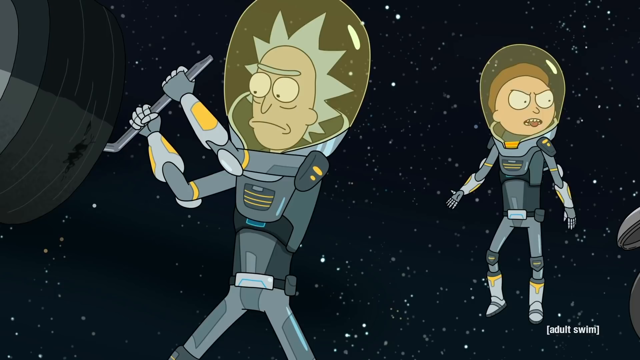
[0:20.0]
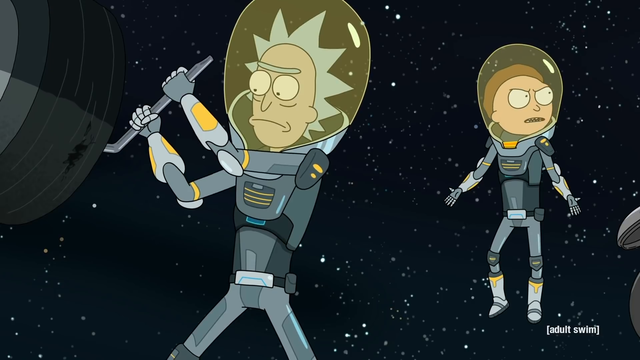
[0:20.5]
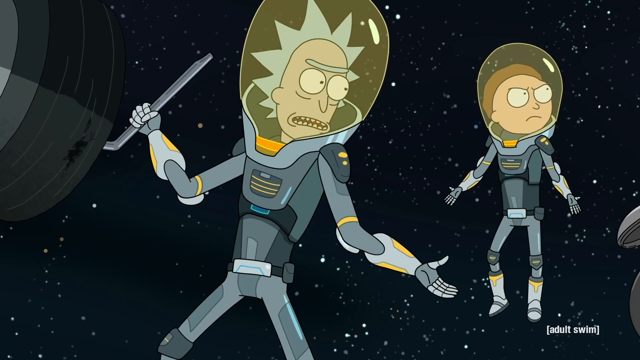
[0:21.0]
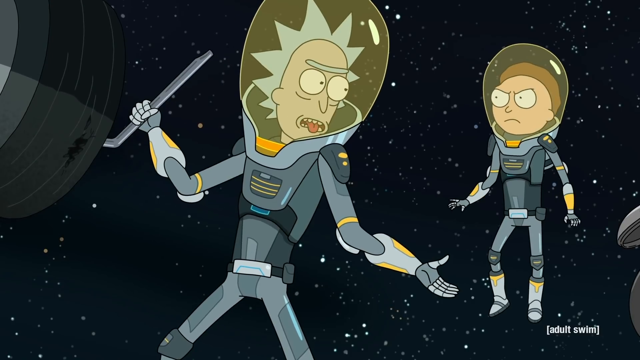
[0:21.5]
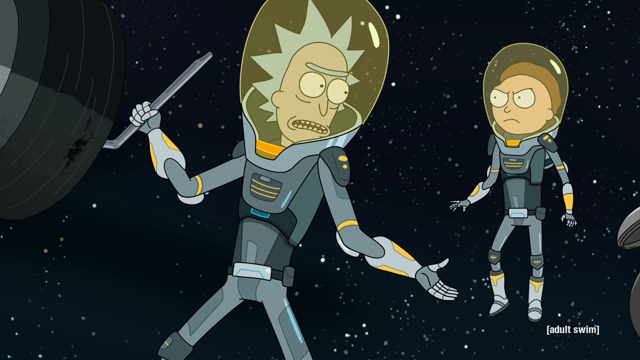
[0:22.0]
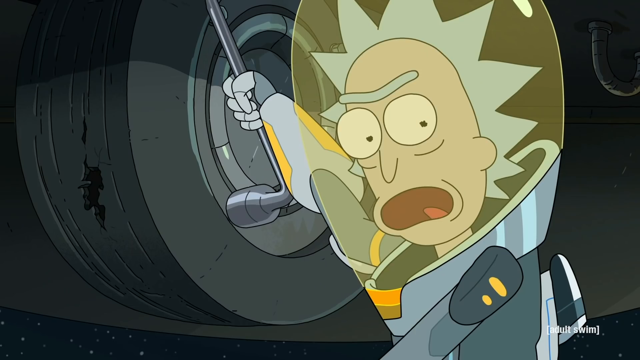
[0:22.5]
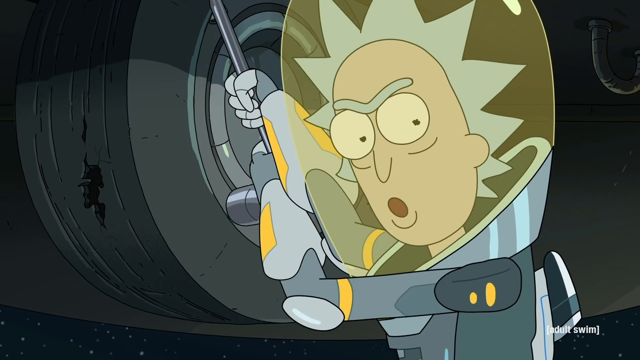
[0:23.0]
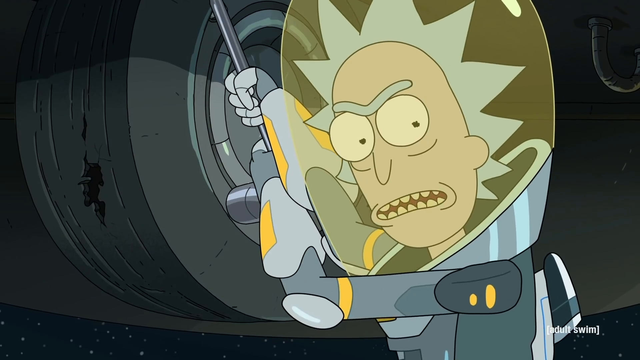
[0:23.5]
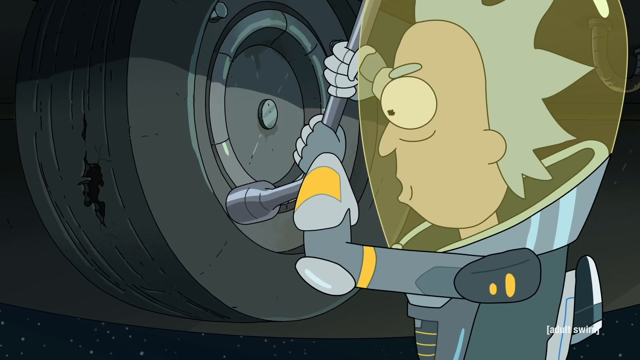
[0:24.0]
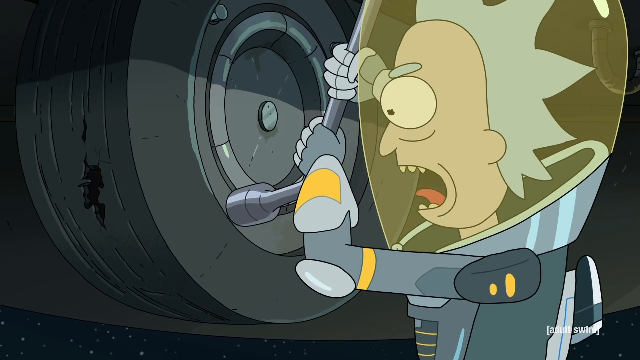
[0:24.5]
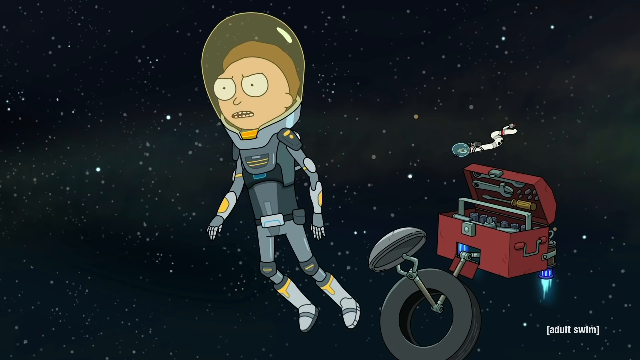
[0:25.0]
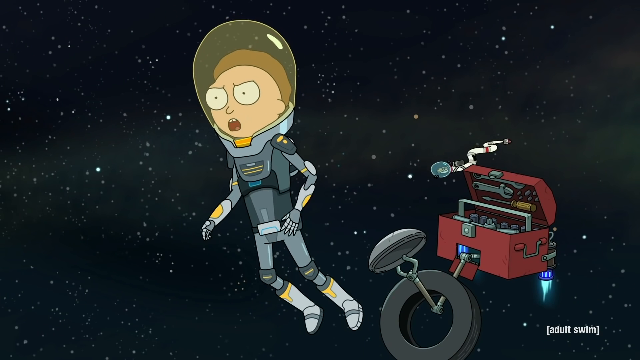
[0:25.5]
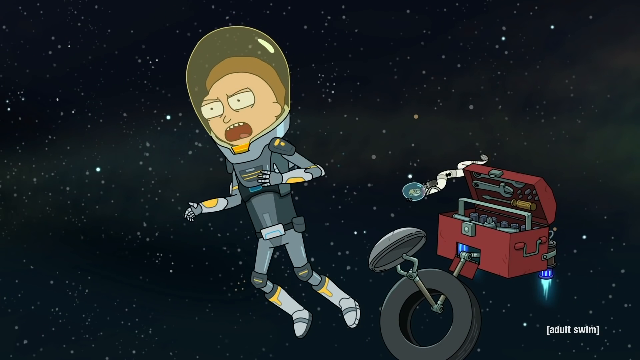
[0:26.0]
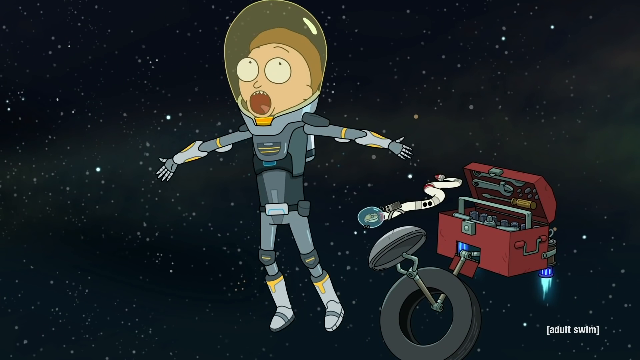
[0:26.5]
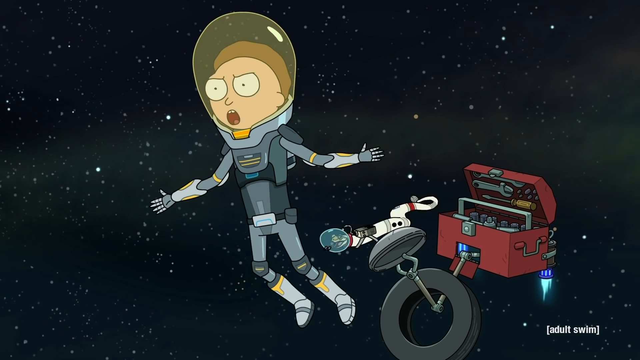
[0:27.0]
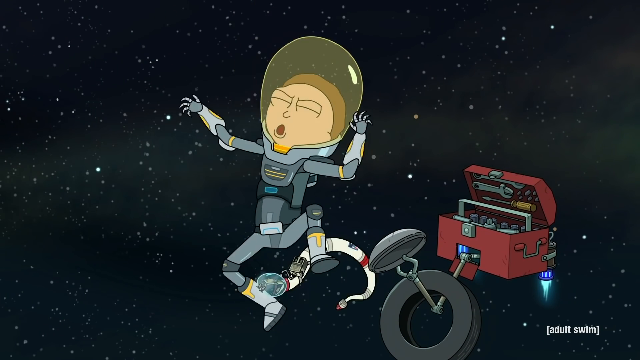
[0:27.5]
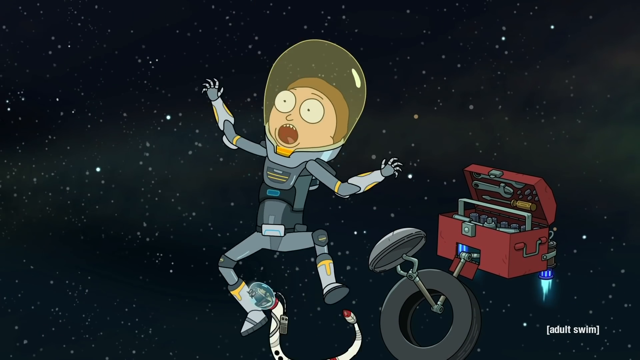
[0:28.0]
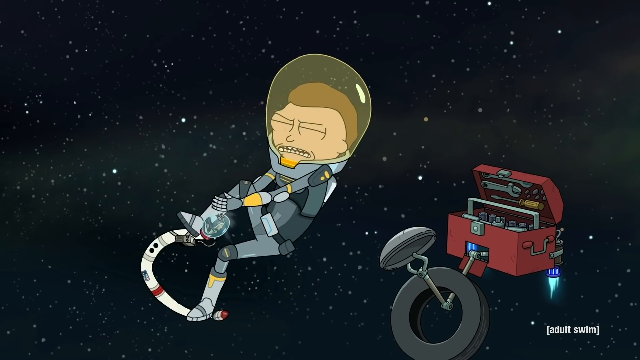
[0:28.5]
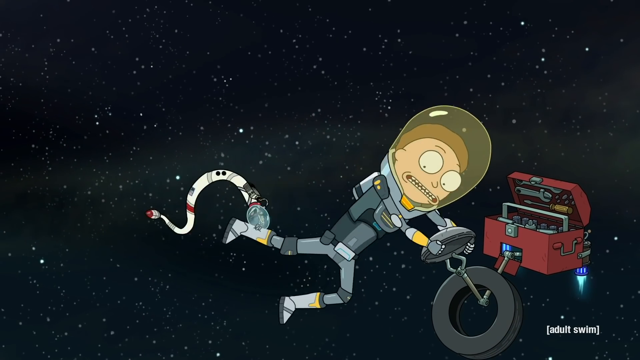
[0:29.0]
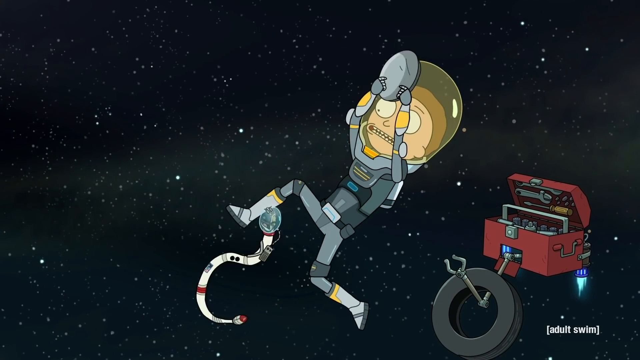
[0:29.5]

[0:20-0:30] In a cartoon, two astronauts work on a spaceship, apparently trying to change a spare tire. At first they seem to be kind of arguing, and the older astronaut, who is bigger, tries to get the crowbar to work on the tire. Then a snake comes along from outer space and bites the leg of the younger astronaut, not the one working on the spaceship. A toolbox is suspended in the air, apparently kept up by two jets underneath it; it holds a whole bunch of tools and looks like it is holding onto a spare tire. The tire on the spaceship has rips in it, with holes visible in the rubber.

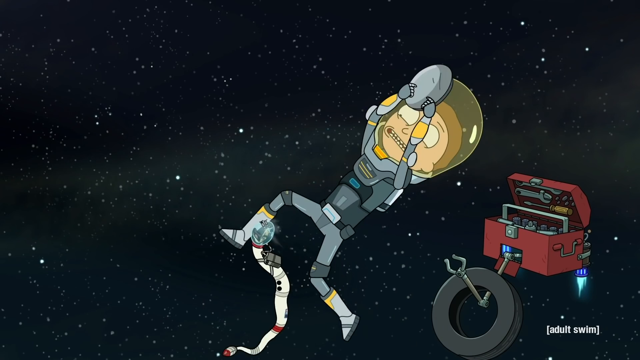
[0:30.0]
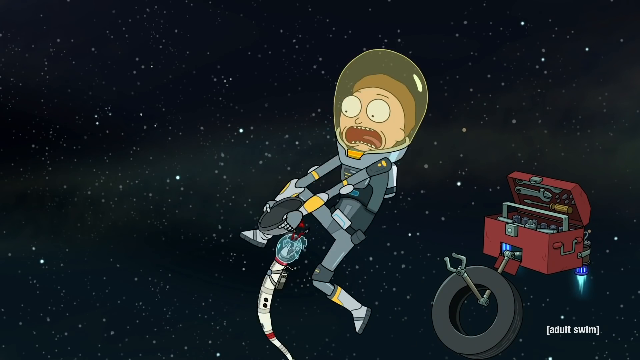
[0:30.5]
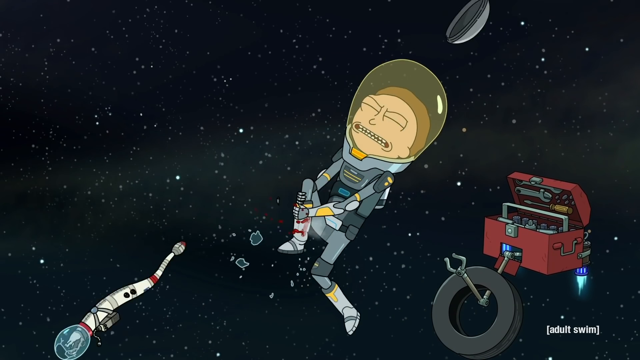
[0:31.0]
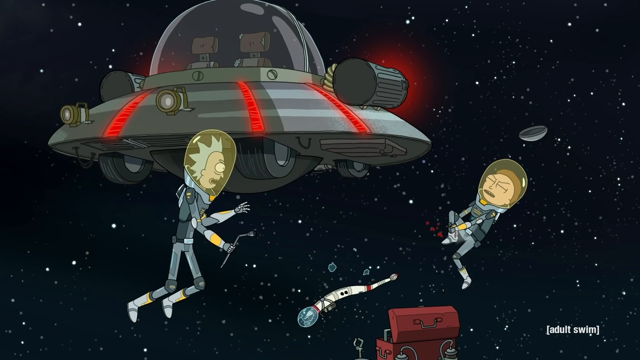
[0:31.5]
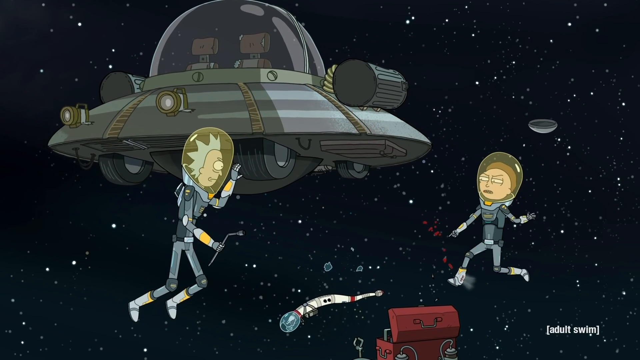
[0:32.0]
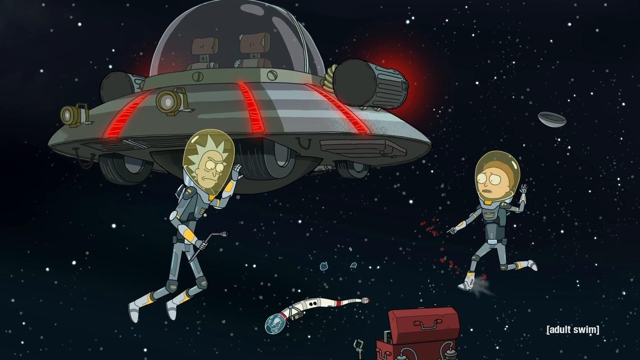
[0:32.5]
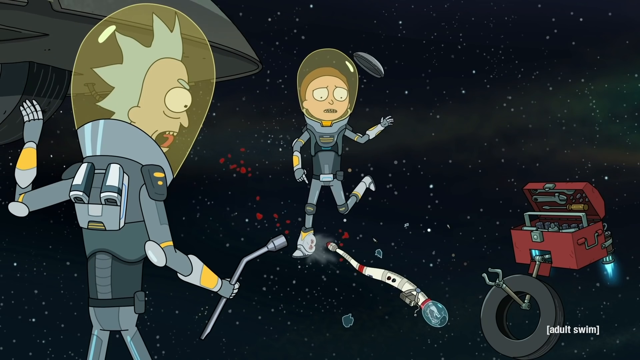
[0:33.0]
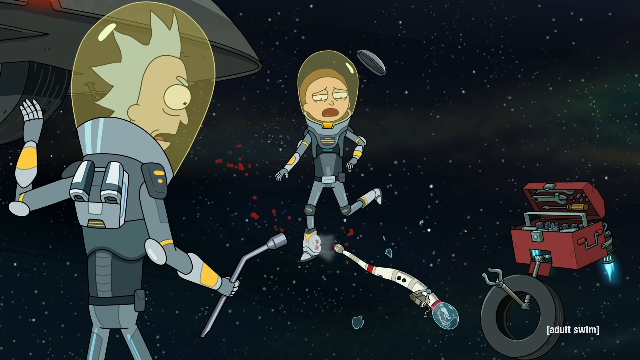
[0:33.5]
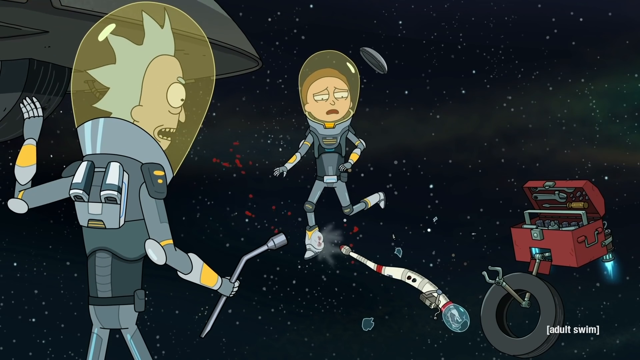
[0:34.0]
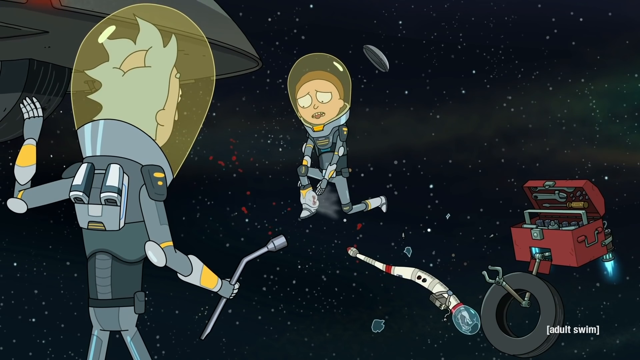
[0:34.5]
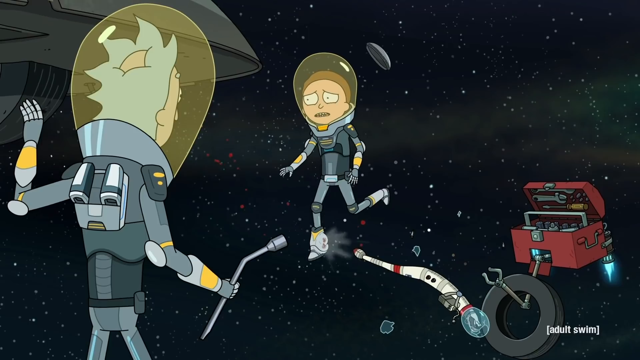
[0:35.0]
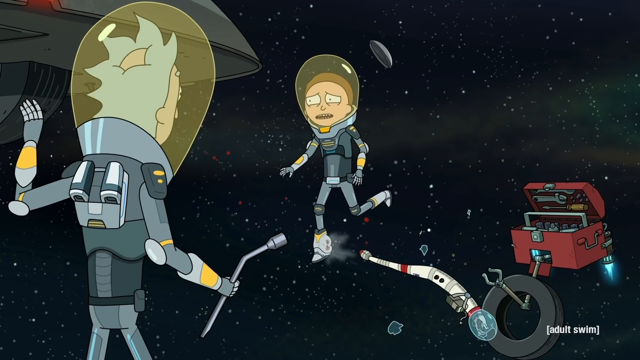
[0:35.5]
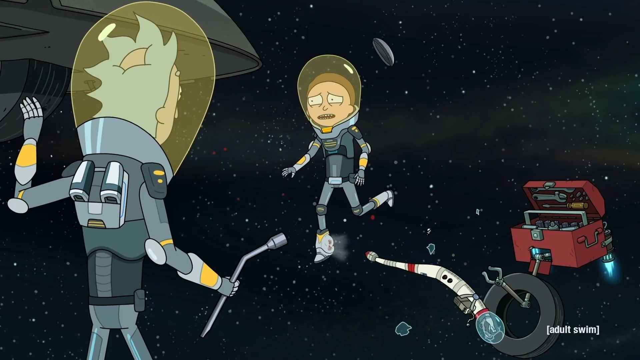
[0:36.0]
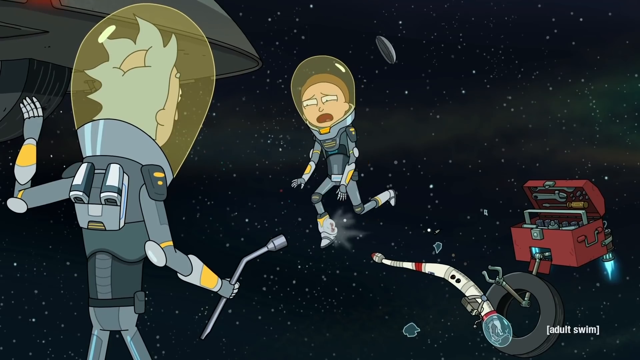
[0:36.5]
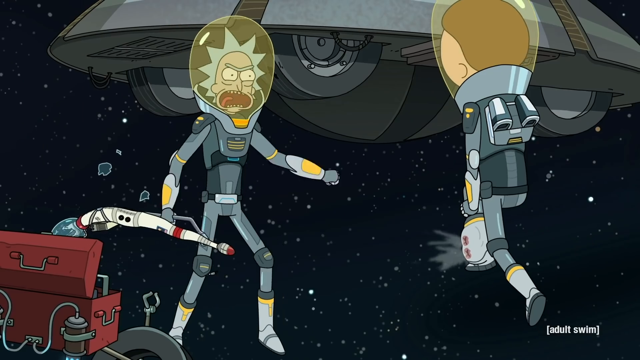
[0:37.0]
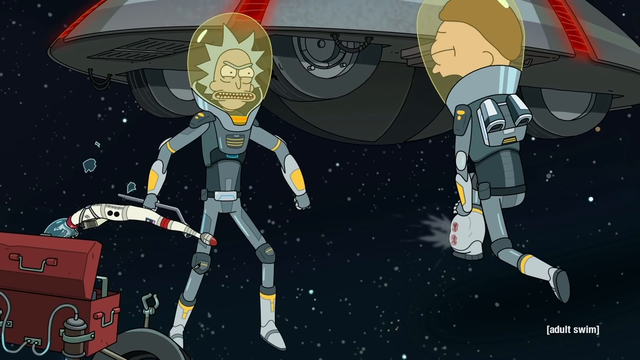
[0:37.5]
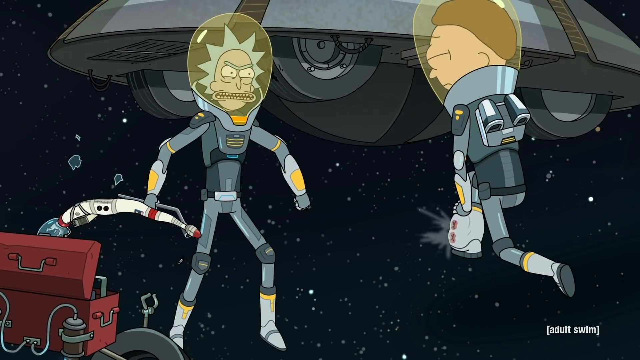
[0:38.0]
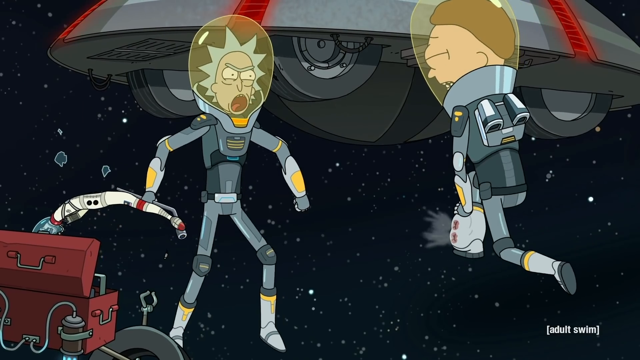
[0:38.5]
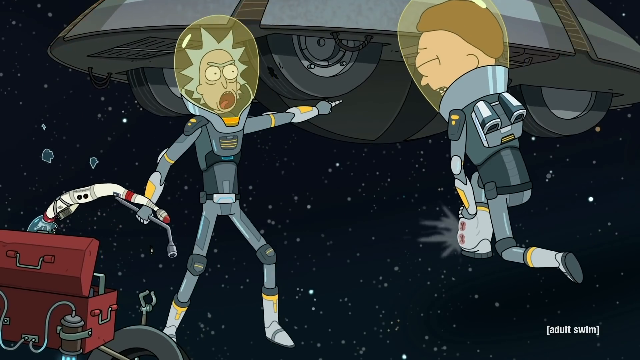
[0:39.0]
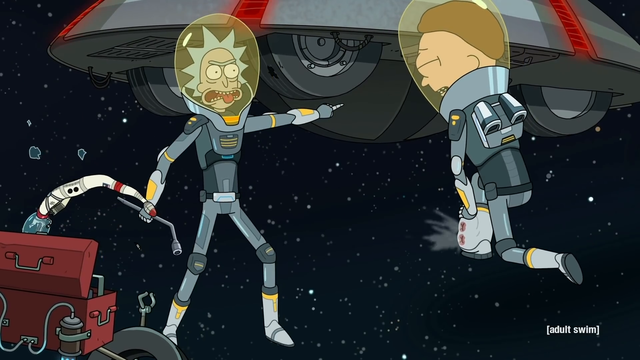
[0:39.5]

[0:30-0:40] The younger astronaut takes a disc, clasps it, and sends it flying back behind him as he grabs his leg, which was just bitten by the snake moving through the air. The snake looks like it has died: it is no longer moving and floats off into outer space. The red strip lights on the spaceship are still blinking. The older astronaut, who was working on the tire, points to the tire and appears to be yelling at the younger astronaut. The toolbox is still there, kept floating by the jets in the back, and it has a hook holding a spare tire for the spaceship. The sky is still very black, with little glowing stars everywhere.